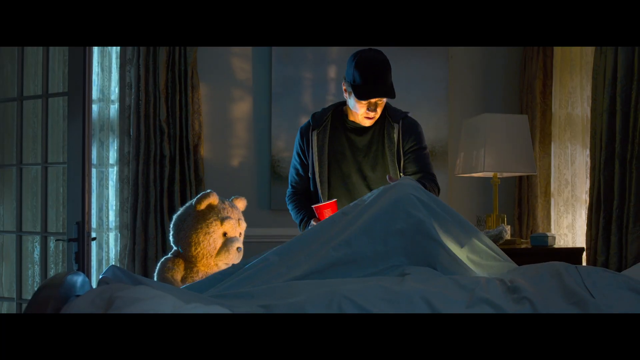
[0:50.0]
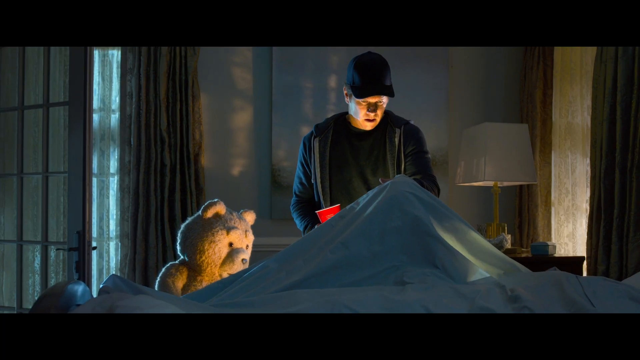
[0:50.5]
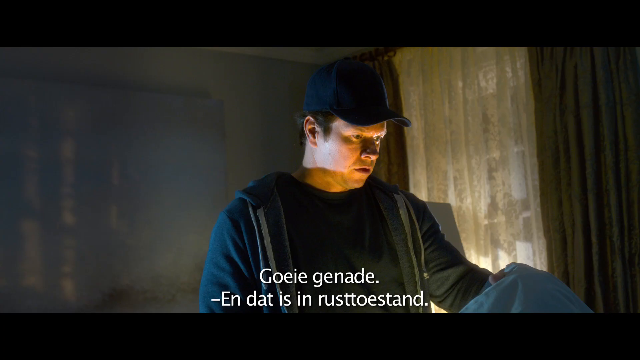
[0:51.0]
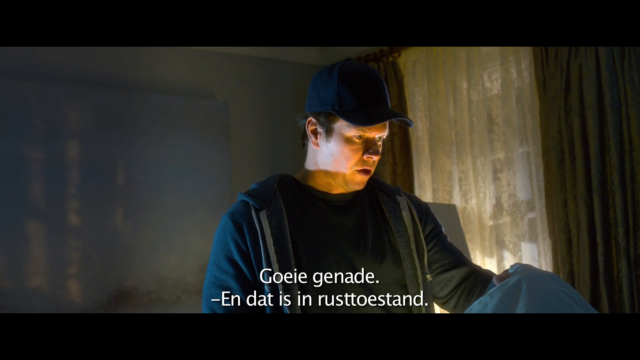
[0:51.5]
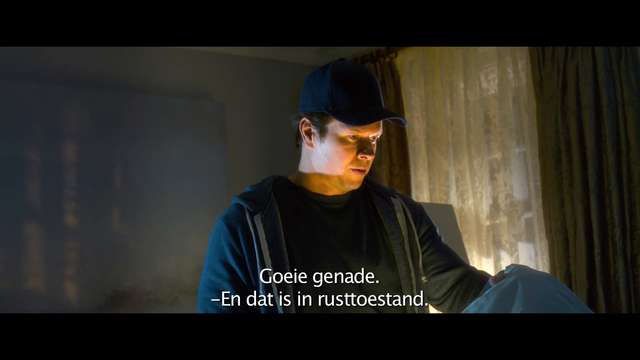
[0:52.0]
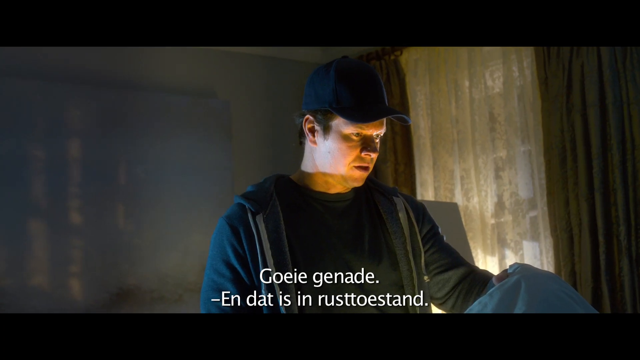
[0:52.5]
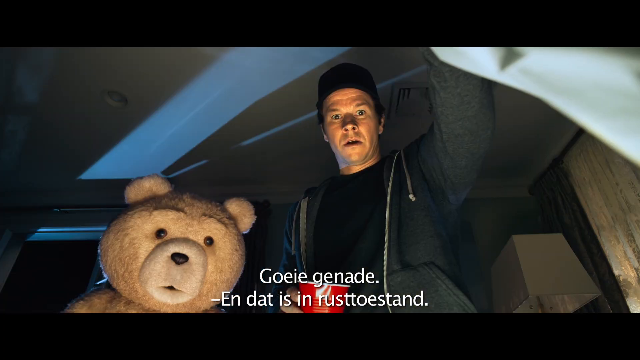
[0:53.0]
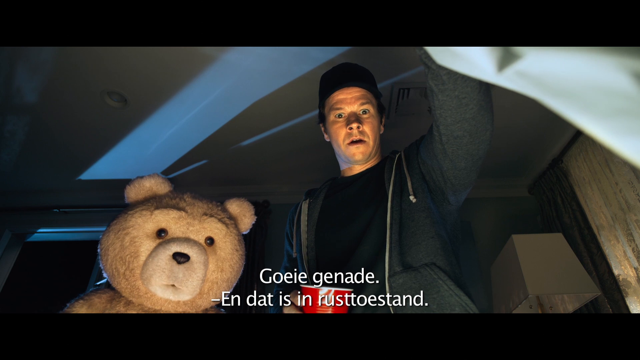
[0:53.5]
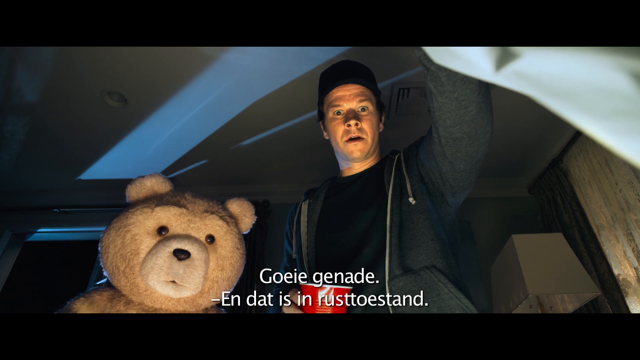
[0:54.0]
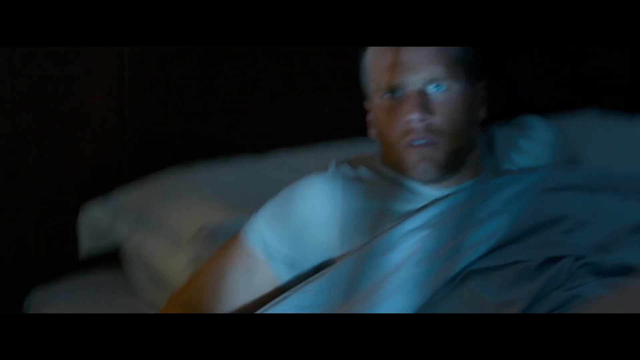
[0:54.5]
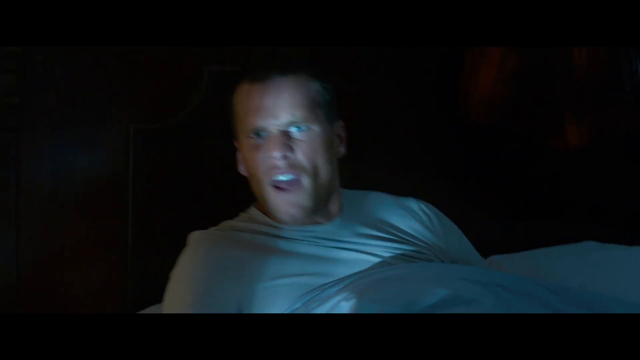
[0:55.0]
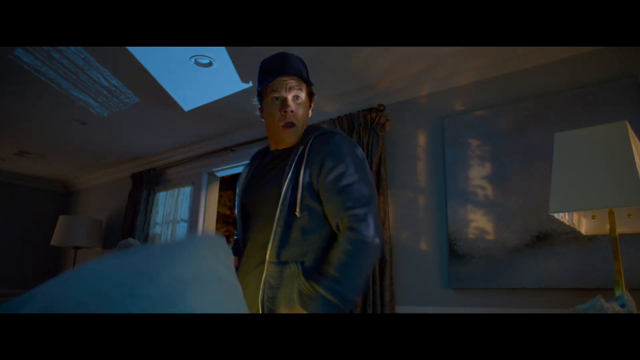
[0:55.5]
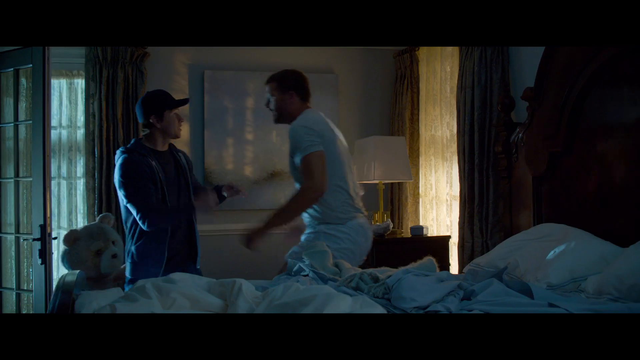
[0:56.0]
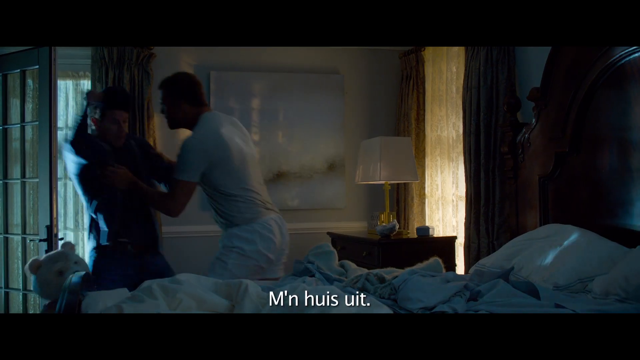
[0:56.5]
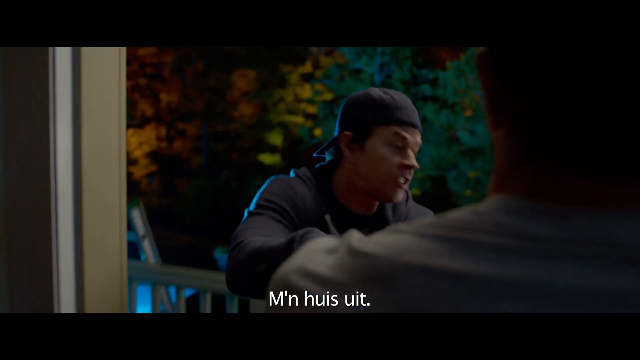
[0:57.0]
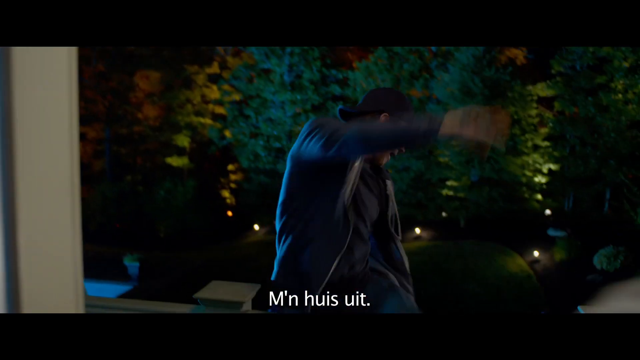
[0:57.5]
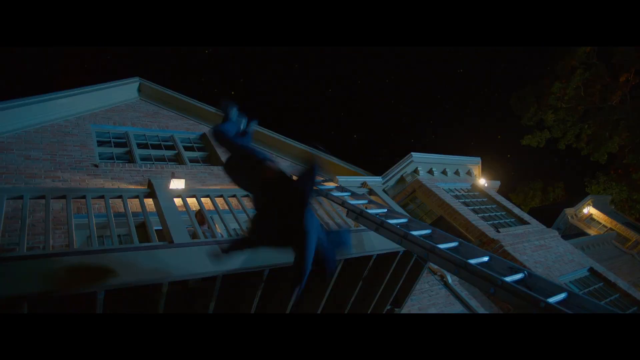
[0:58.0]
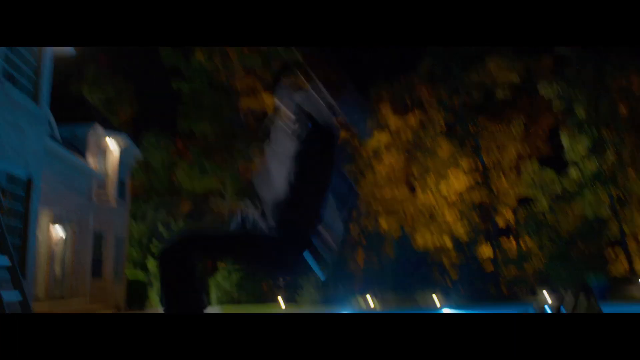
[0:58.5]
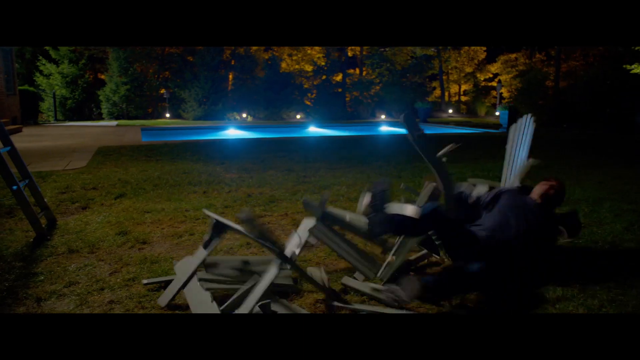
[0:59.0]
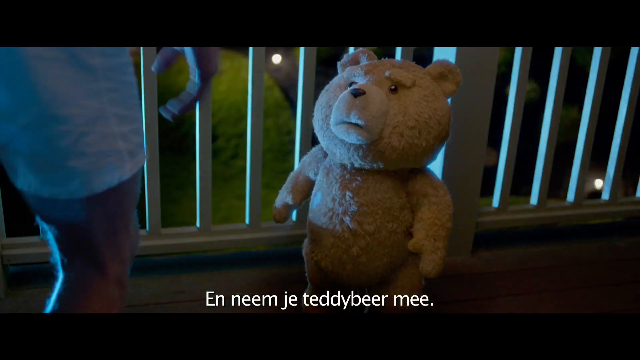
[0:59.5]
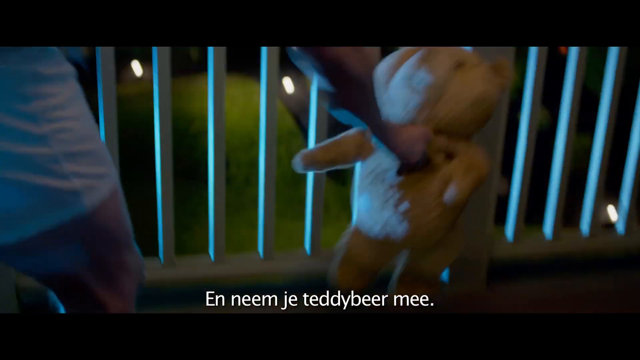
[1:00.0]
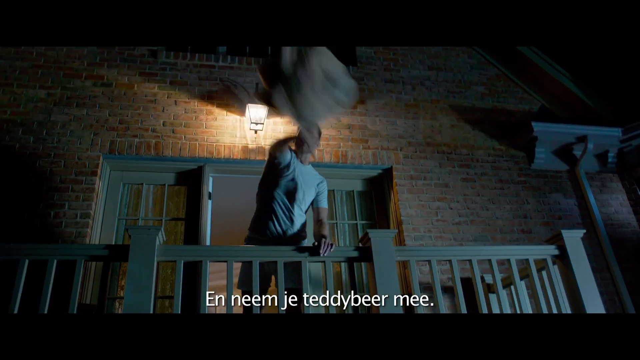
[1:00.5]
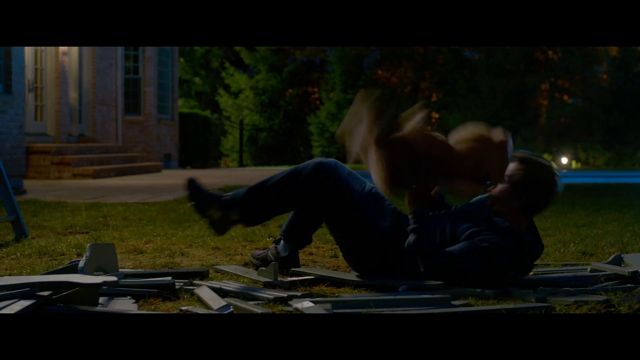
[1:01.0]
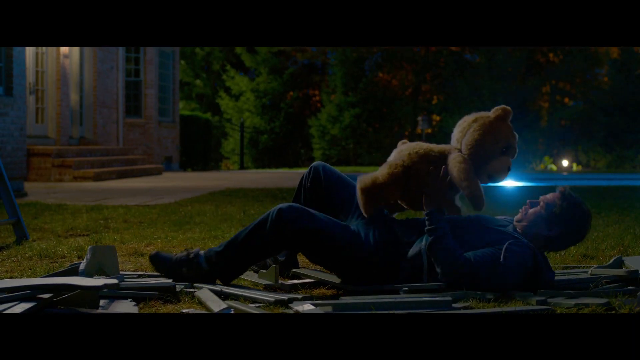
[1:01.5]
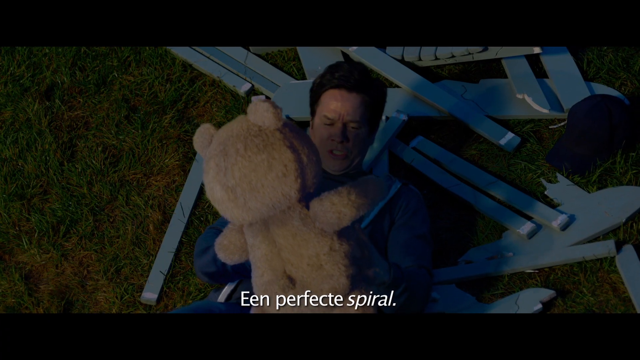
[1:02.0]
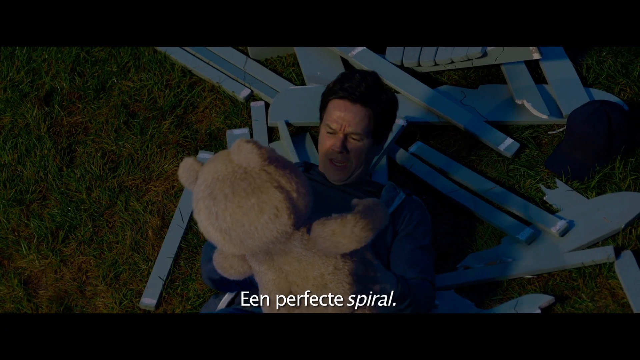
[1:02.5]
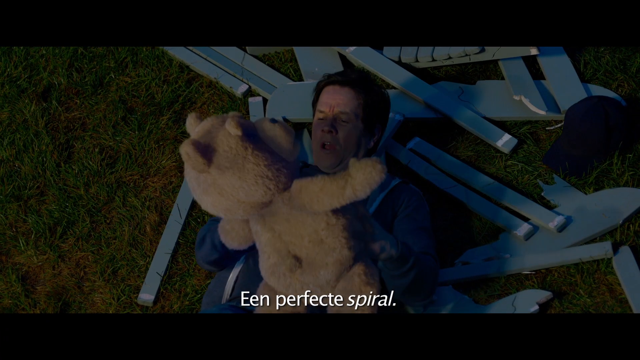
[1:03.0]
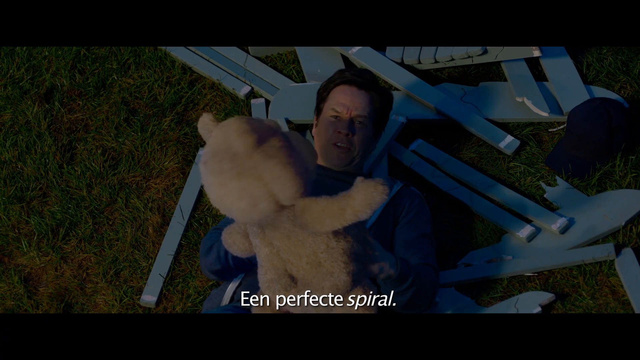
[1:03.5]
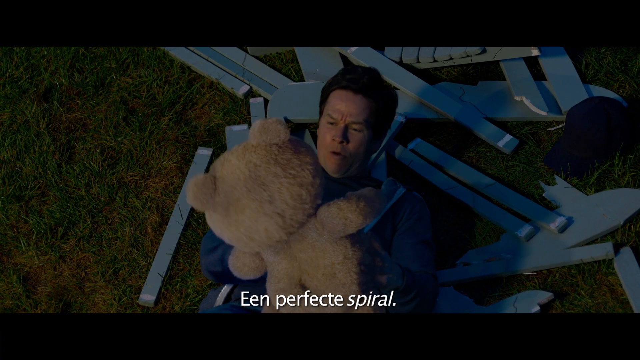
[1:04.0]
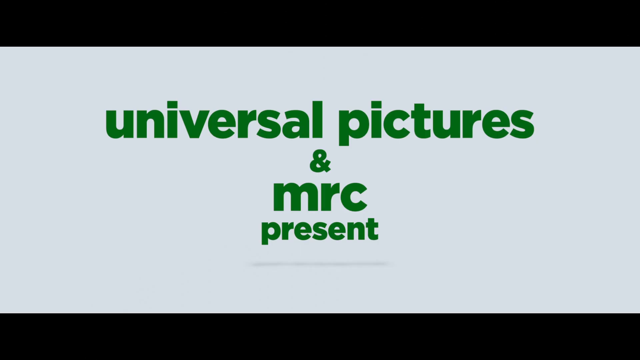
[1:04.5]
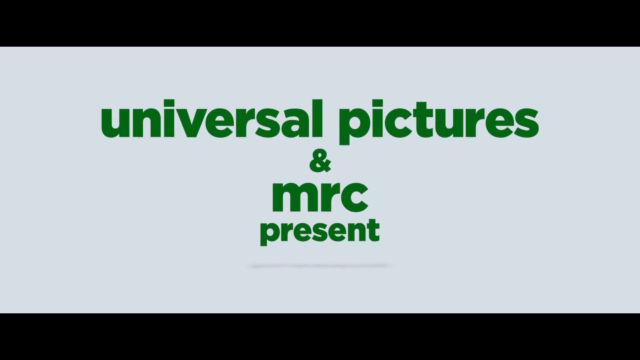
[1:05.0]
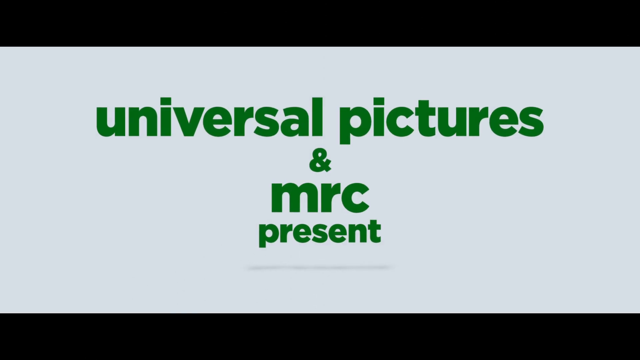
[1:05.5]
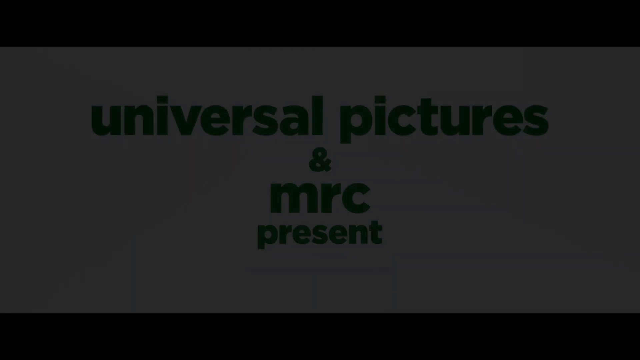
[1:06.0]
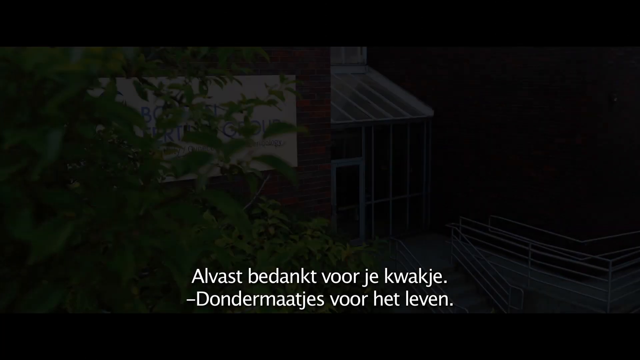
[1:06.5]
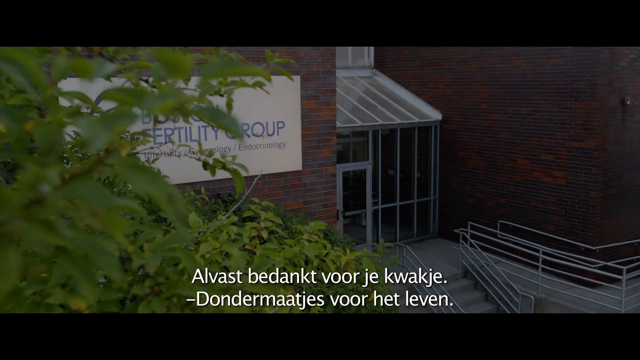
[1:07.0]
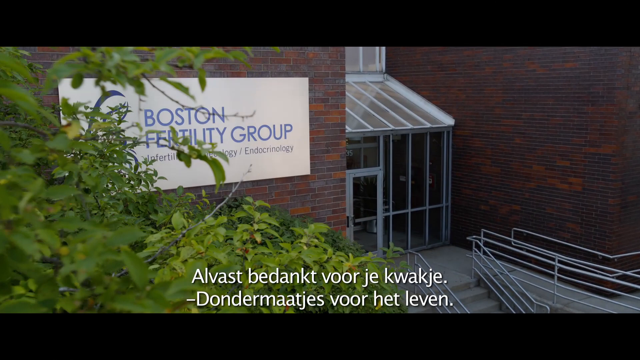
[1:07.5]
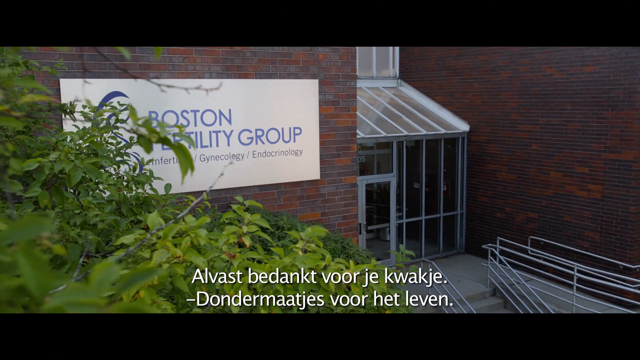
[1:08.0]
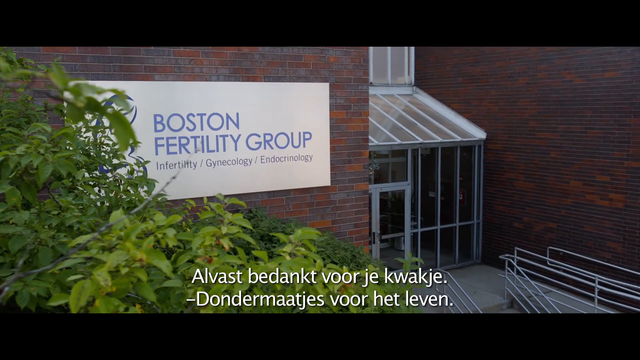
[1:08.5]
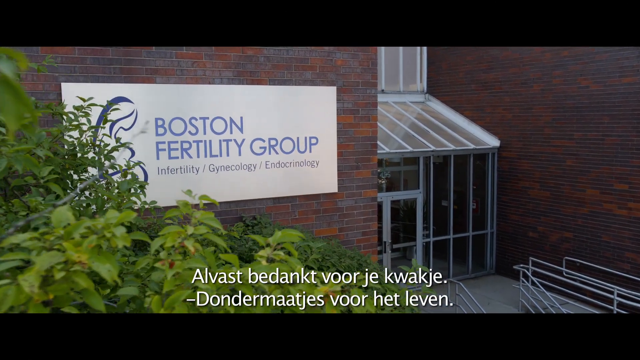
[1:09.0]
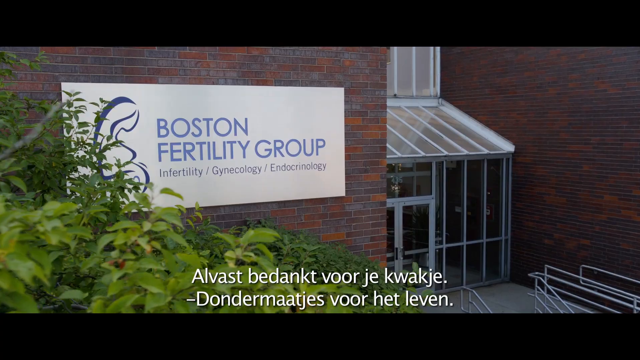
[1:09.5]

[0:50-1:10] In close-up, Tom Brady wakes up, angry. He stands up out of bed and pushes Mark Wahlberg off the balcony; Wahlberg falls, apparently onto some Adirondack chairs, which splinter as he lands. Tom Brady wears a t-shirt and white boxers. He also throws the teddy bear off the balcony, and the bear lands on top of Mark Wahlberg. Opening credits follow on a white background in lowercase green letters: "universal pictures and MRC present". An elevated view then focuses on a red brick building with a white sign reading "Boston Fertility Group" in light lavender capitals. The view moves in closer, showing green trees to the lower left and a heavily windowed doorway and atrium at the front. Under the "Boston Fertility Group" headline, small text reads "infertility gynecology endocrinology".